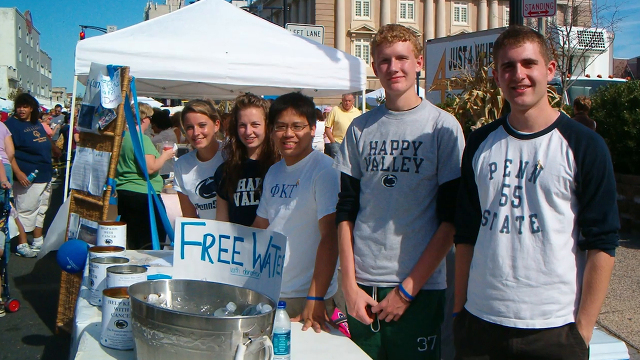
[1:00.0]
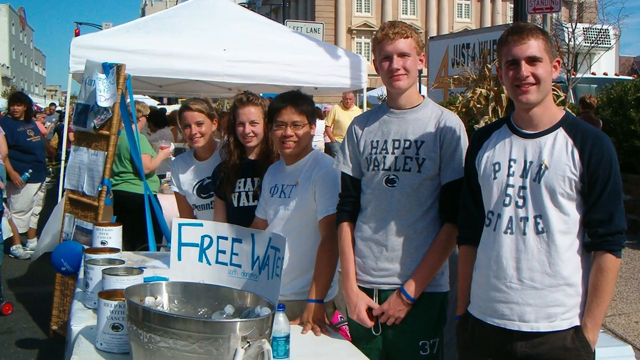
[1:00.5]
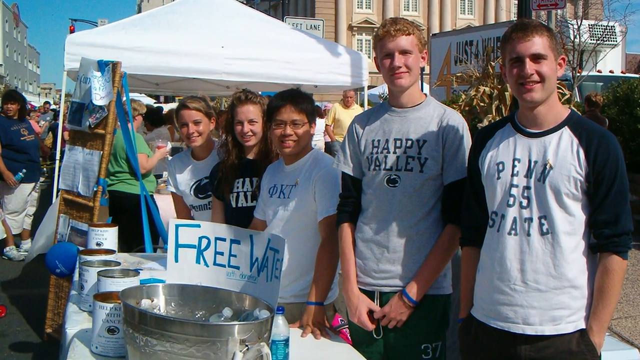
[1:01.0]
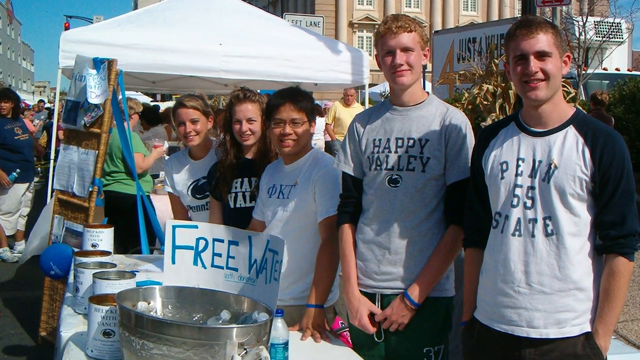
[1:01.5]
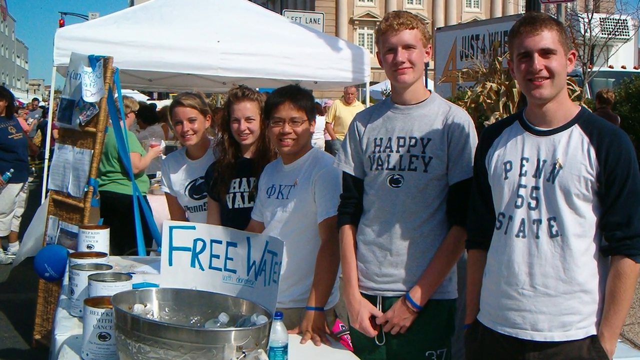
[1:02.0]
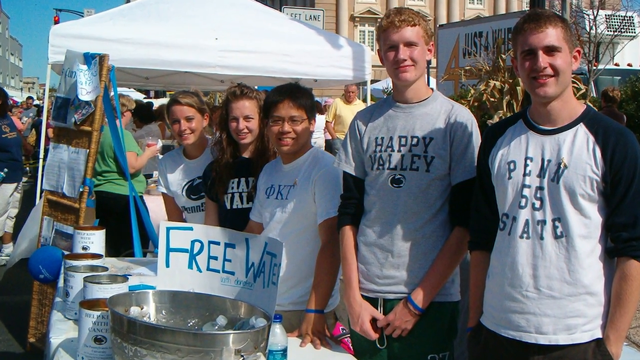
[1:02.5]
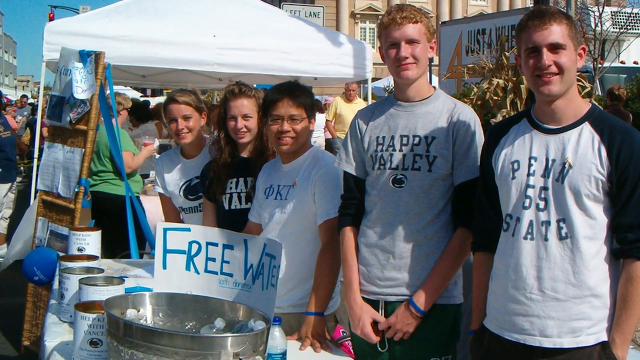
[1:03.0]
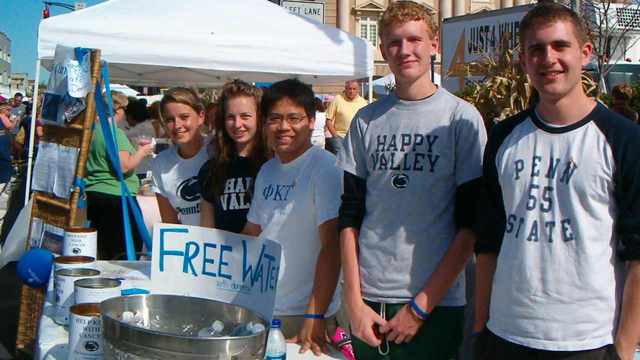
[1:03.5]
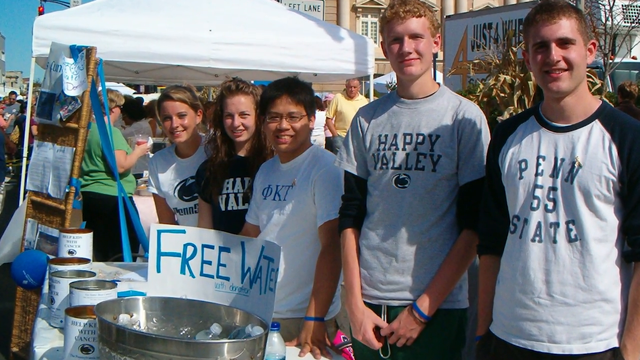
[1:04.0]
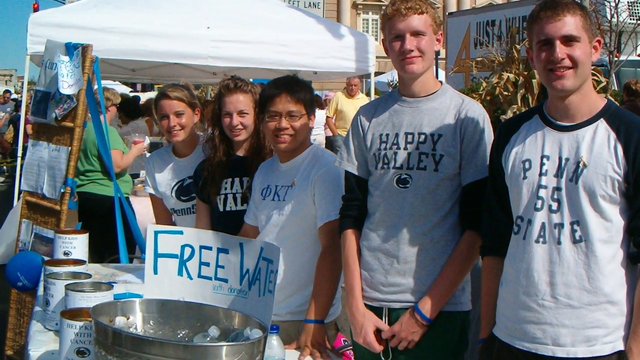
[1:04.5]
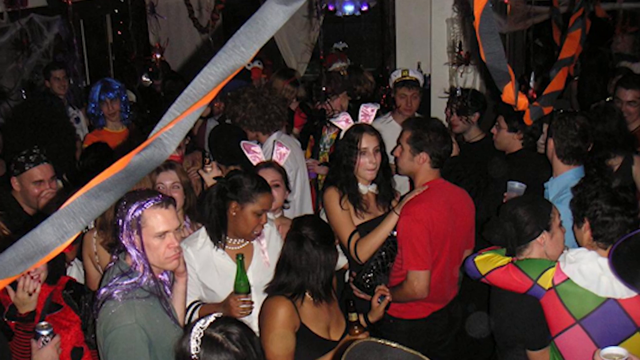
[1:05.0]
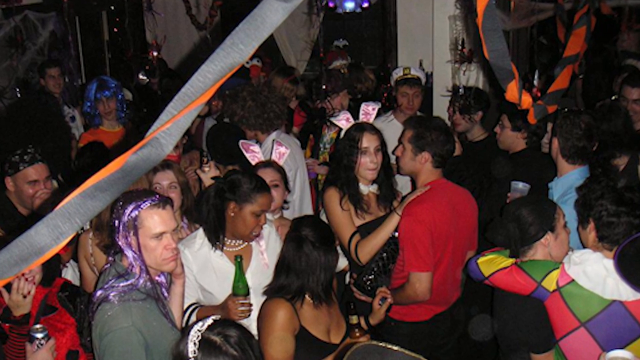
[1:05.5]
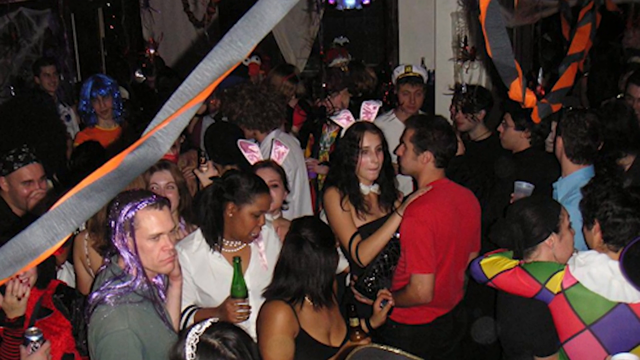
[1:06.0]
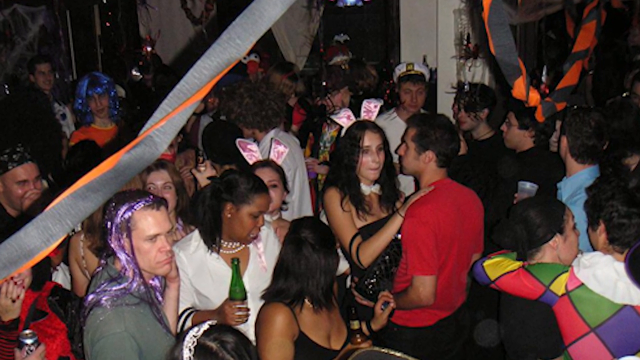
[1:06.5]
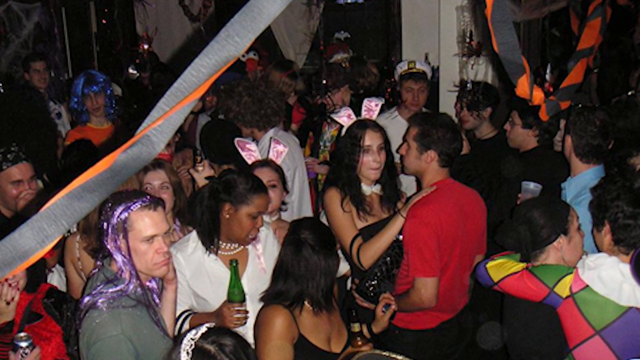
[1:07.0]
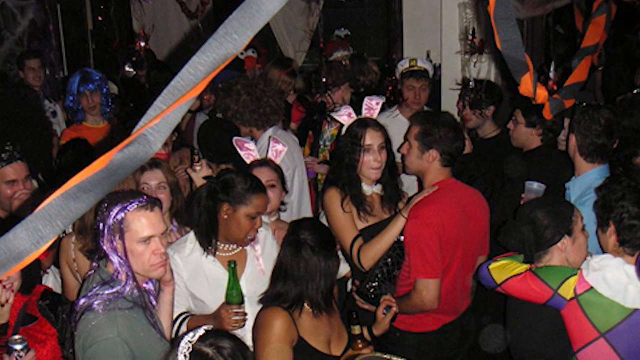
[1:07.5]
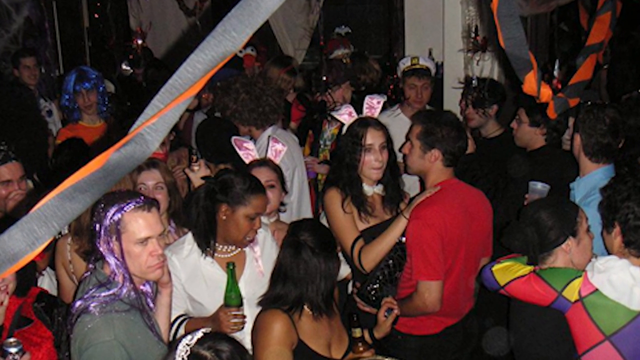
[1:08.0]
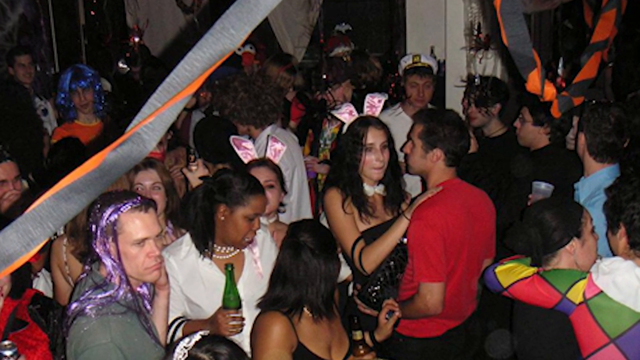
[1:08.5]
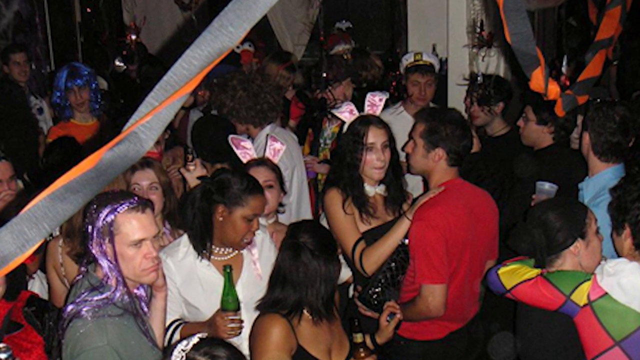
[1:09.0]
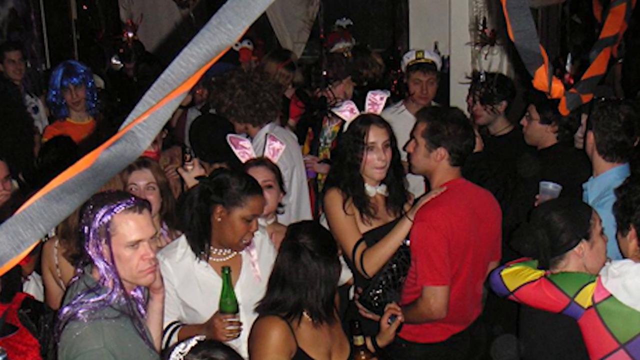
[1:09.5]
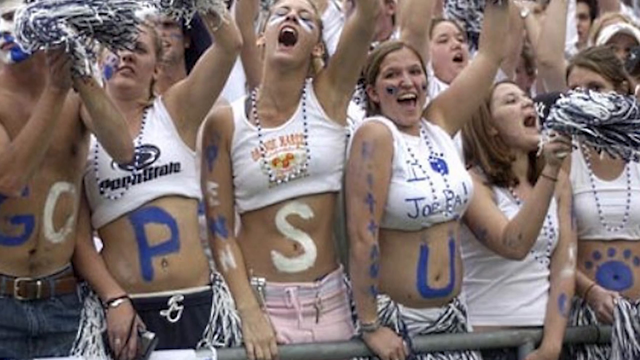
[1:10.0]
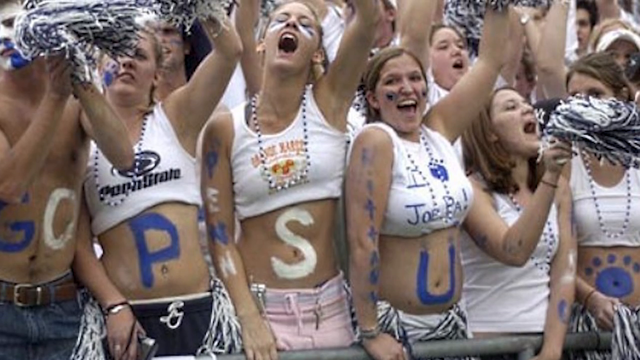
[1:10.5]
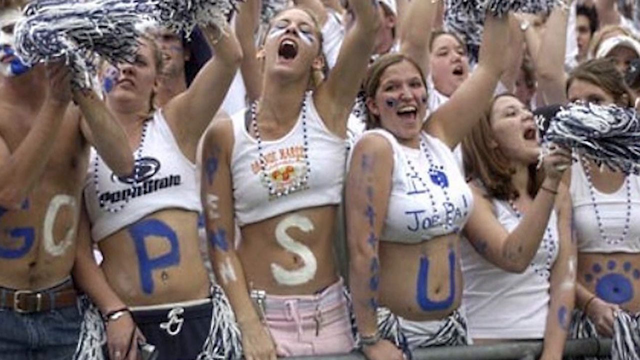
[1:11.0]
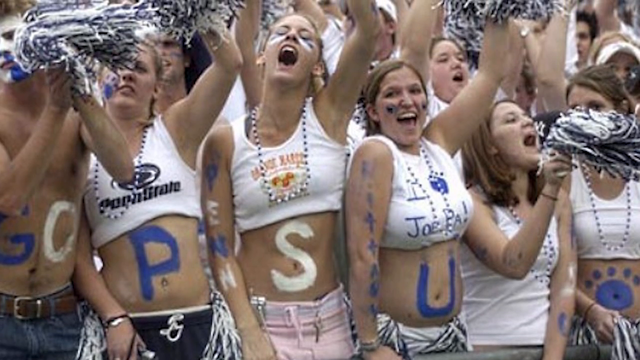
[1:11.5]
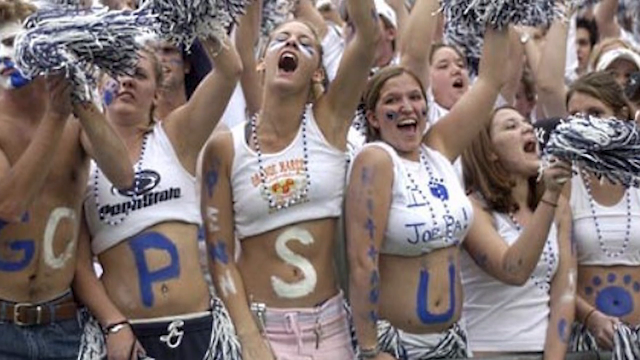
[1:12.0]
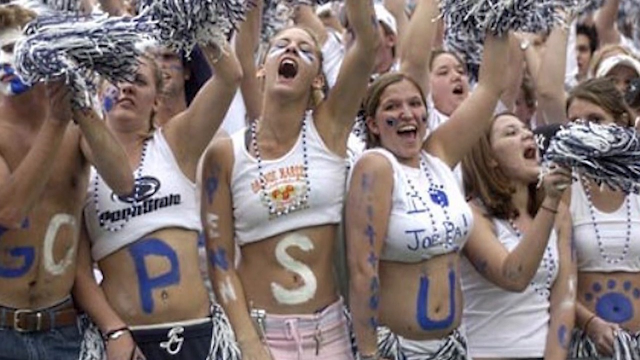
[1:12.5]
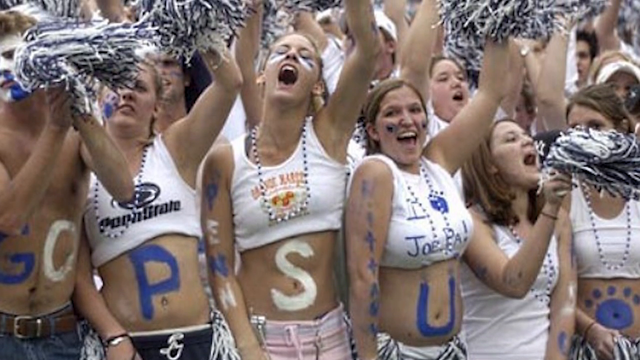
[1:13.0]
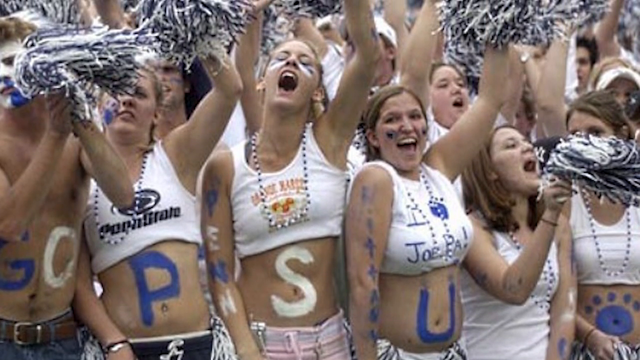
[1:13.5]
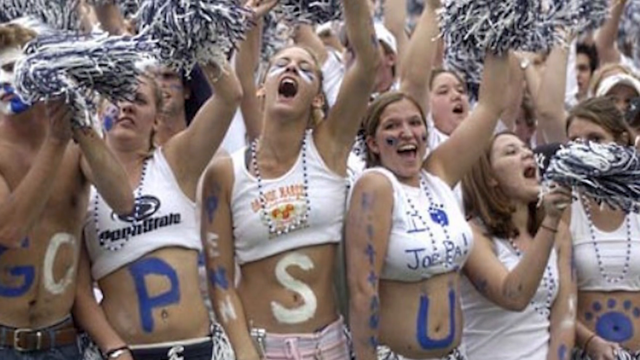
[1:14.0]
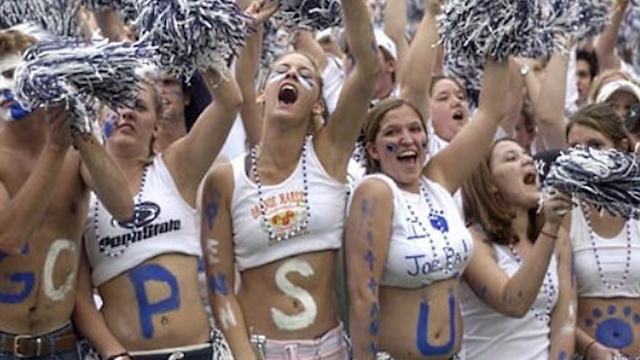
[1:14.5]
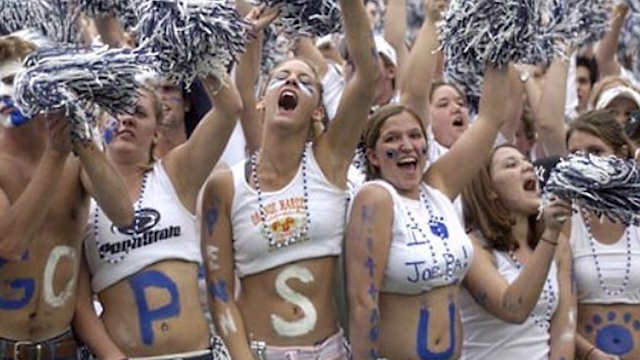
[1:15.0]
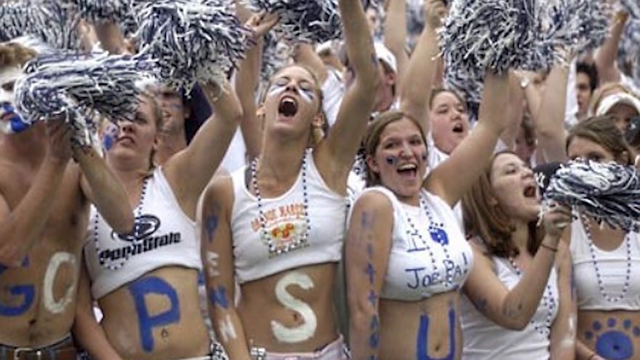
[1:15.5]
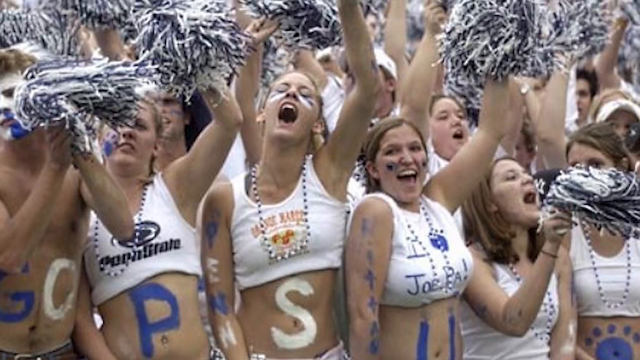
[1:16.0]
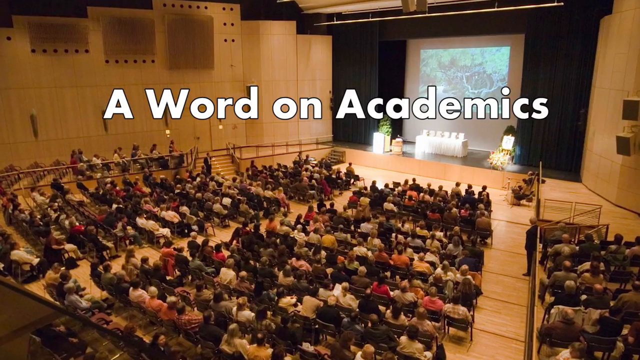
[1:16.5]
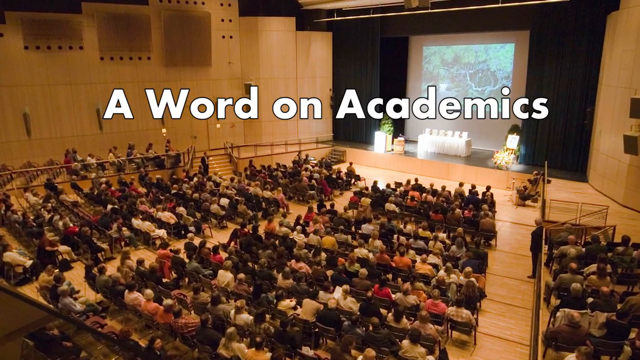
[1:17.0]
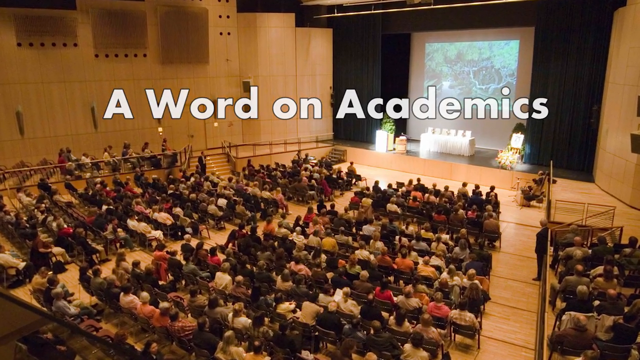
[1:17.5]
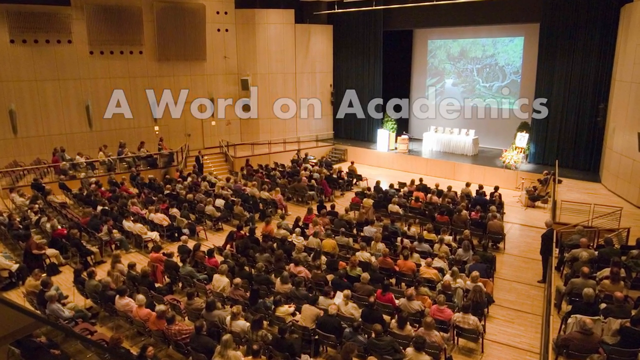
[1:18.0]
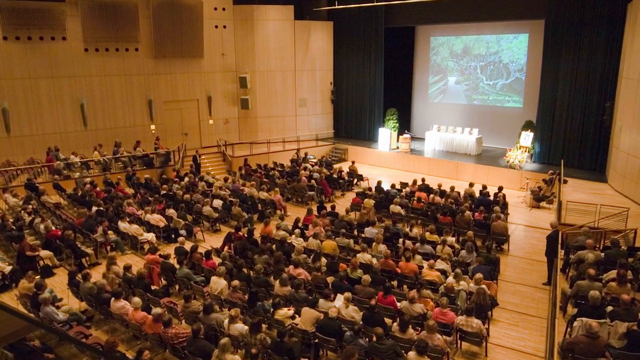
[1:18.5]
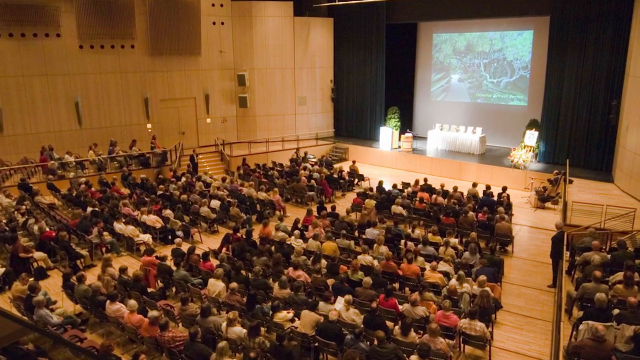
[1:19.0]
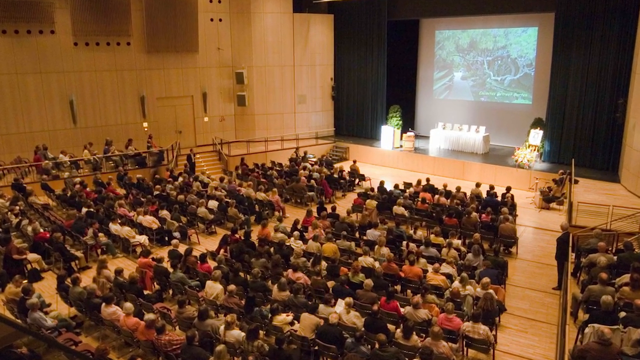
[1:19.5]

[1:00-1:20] A group of students poses for a photo on the celebration day, some sitting and some standing, wearing t-shirts with different text on the front. A note reads "free water", apparently showing that this team was giving away free water that day. Everyone in the photo is smiling. Next, inside an apartment at night, people dressed in funky party clothes are having a party; some dance as couples and some hold alcohol.